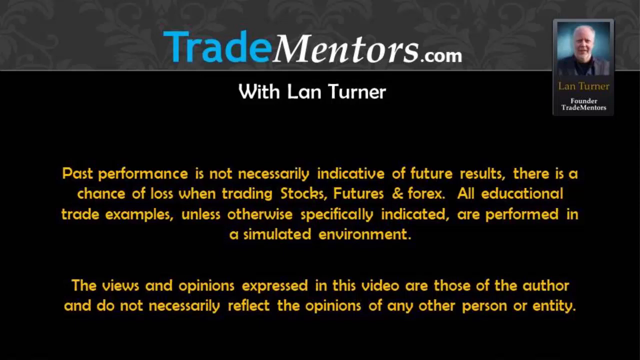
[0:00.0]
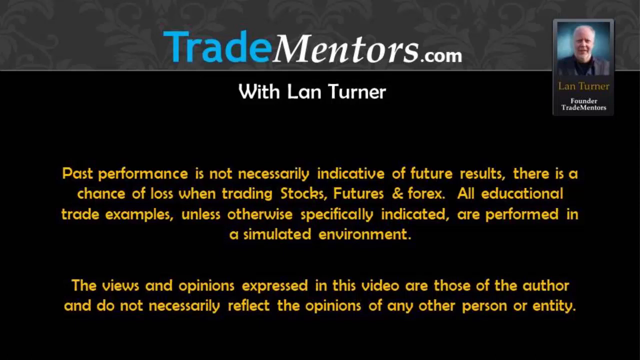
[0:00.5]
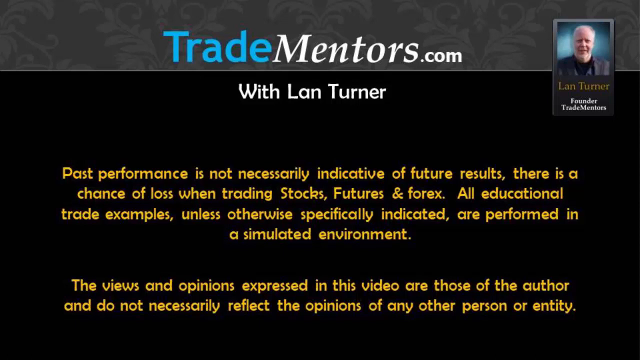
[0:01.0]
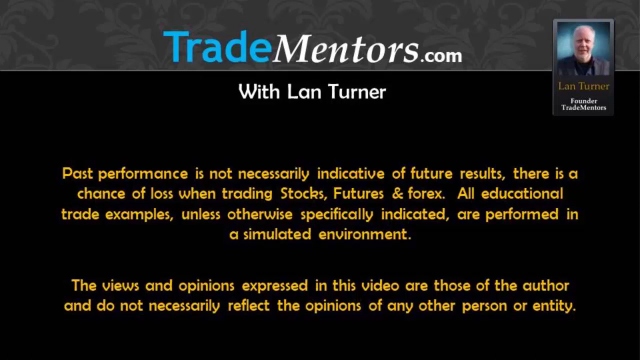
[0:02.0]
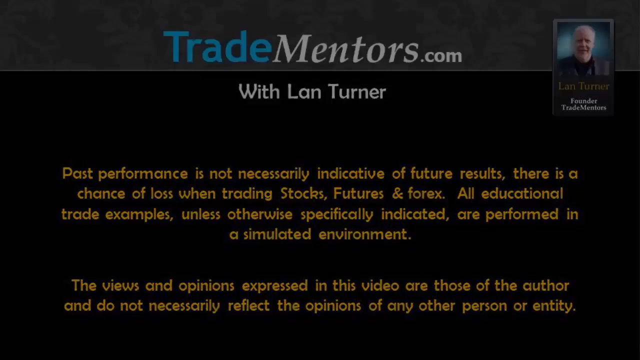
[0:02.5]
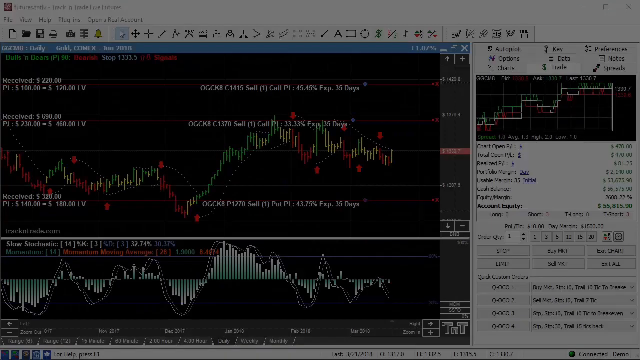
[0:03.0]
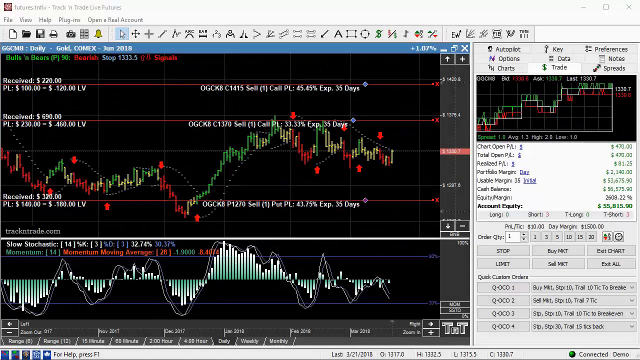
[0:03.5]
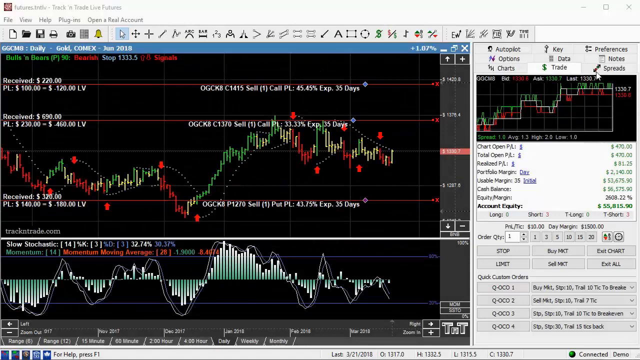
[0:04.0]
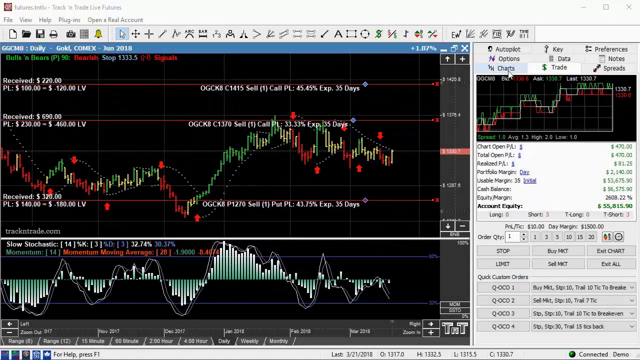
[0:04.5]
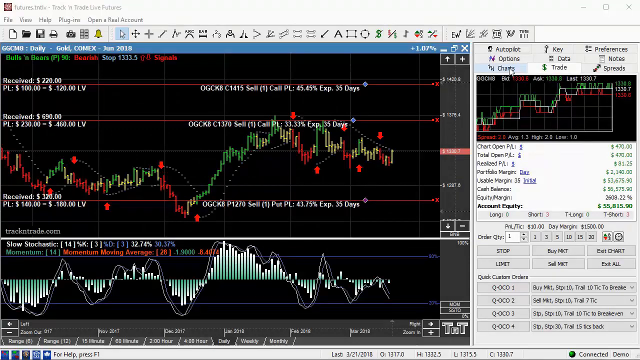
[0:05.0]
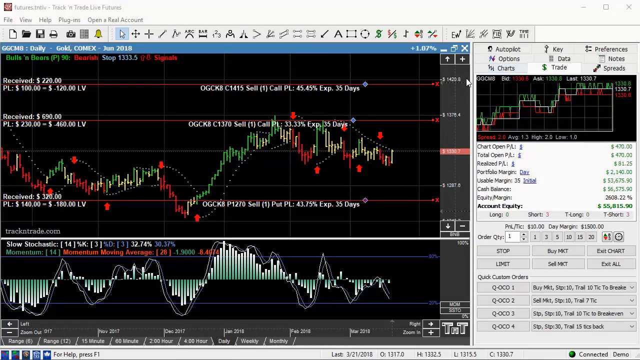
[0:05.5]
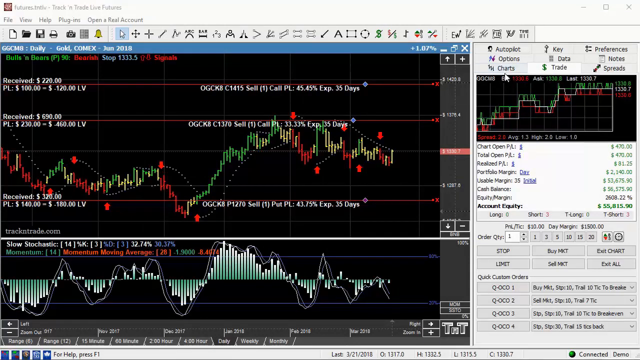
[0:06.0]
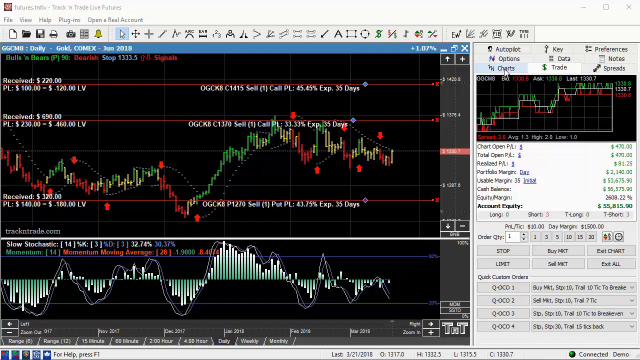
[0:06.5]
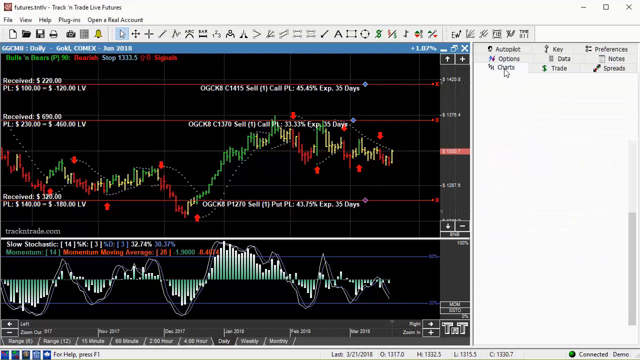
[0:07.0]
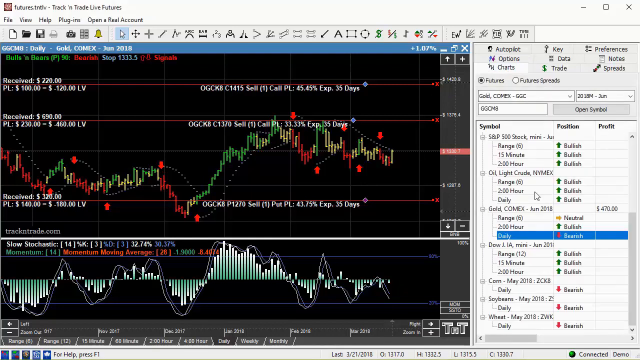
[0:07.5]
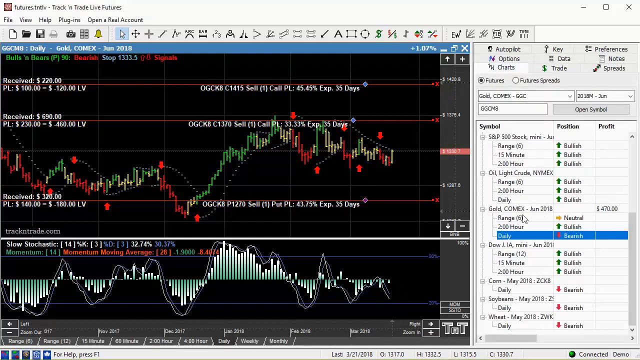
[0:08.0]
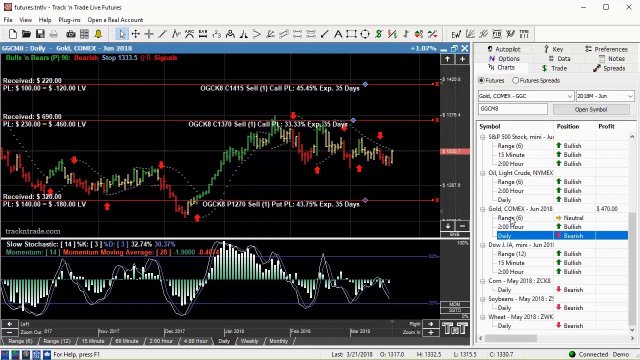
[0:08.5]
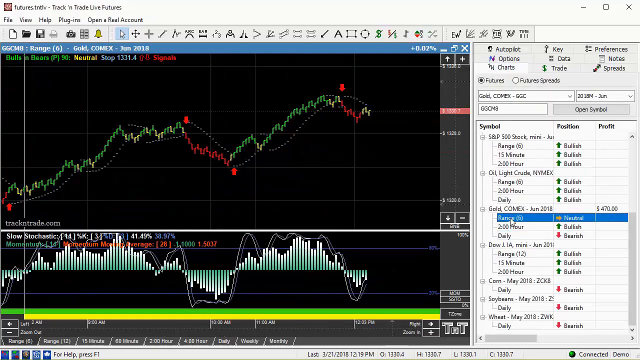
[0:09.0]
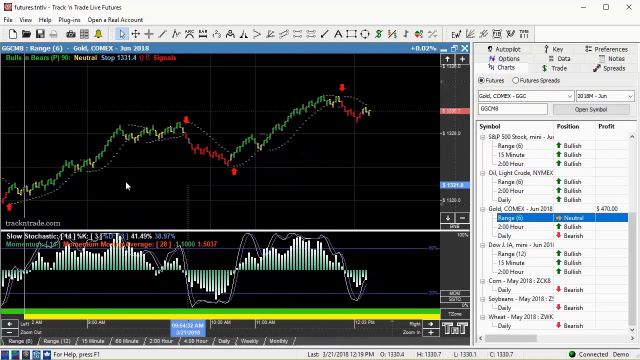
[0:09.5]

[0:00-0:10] TradeMentors.com appears at the top of a dark screen, with a picture of a man named Leon Turner in the top right corner. The video then transitions to a screen full of statistics that indicates some kind of live features and has charts. The mouse moves over to charts, moves away, then comes back and clicks on charts. It then clicks an element on the right-hand side of the screen that has neutral, making it blue, goes to the left-hand side of the screen, and quickly returns to the right.